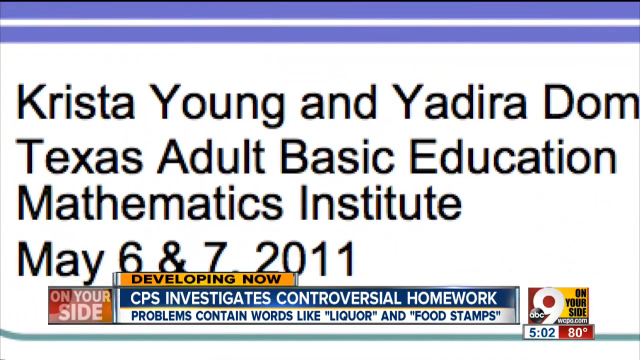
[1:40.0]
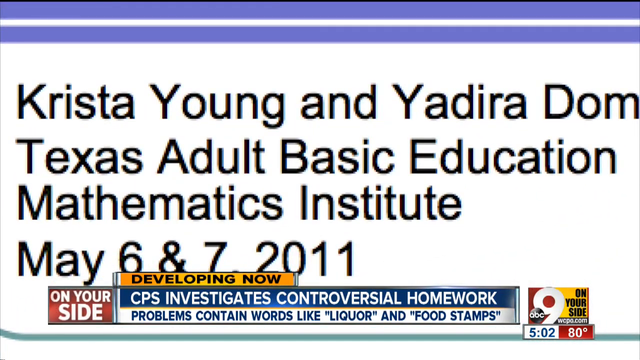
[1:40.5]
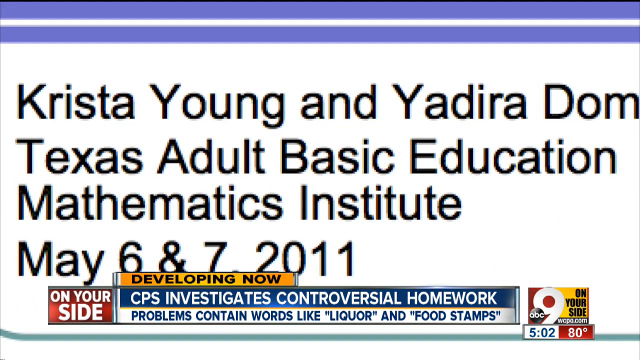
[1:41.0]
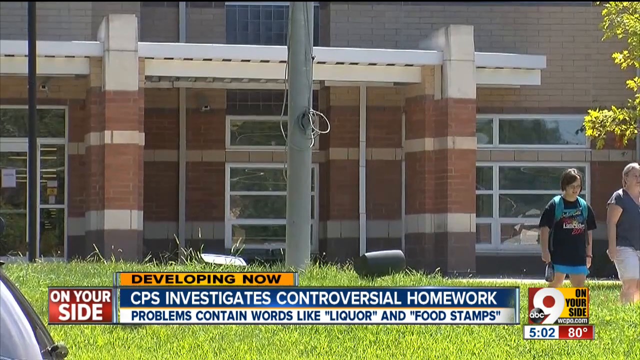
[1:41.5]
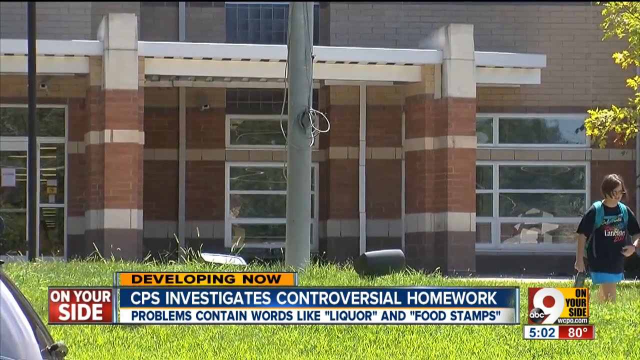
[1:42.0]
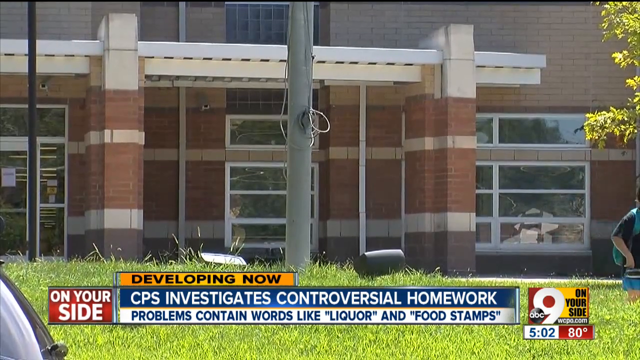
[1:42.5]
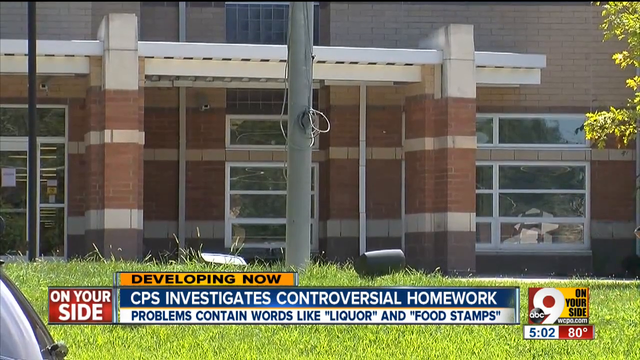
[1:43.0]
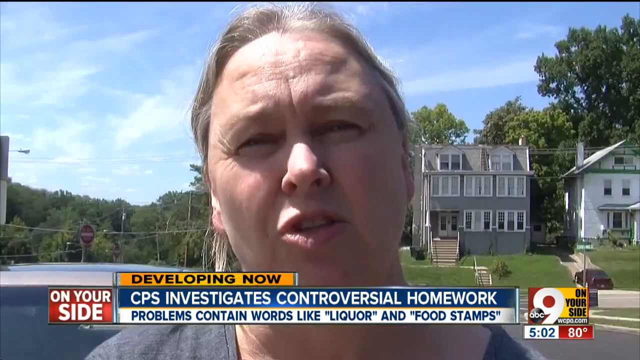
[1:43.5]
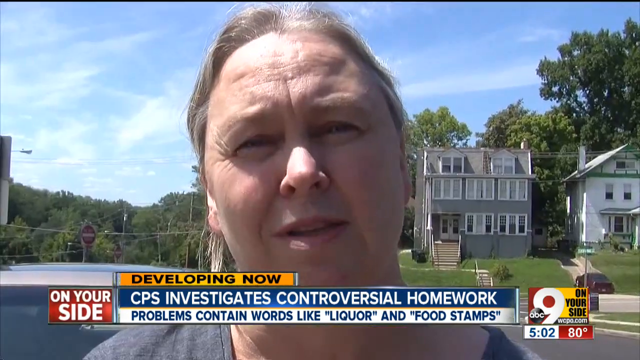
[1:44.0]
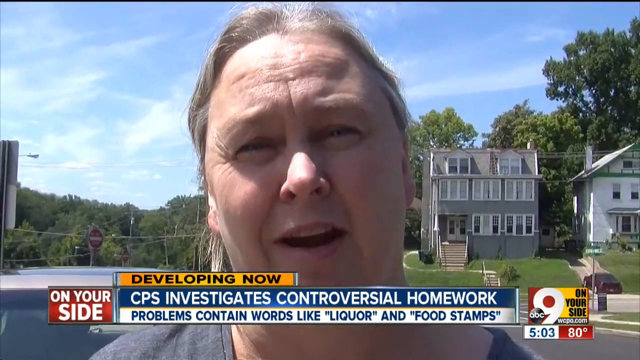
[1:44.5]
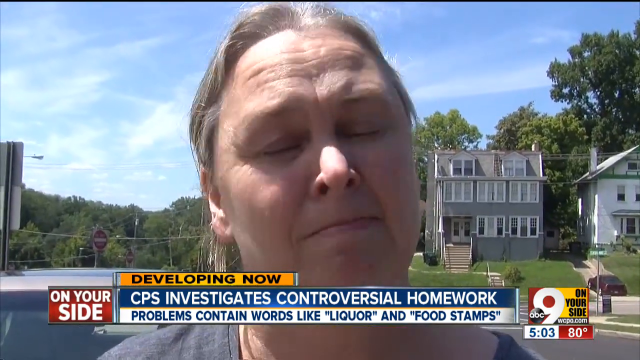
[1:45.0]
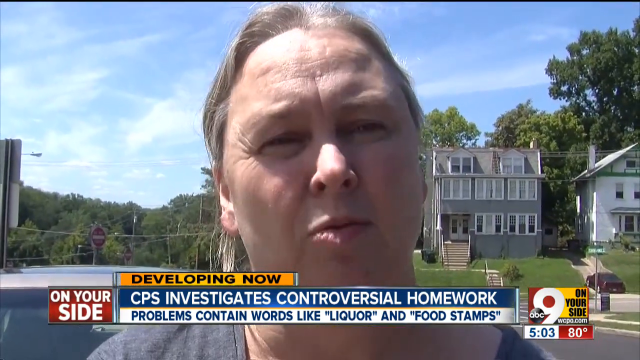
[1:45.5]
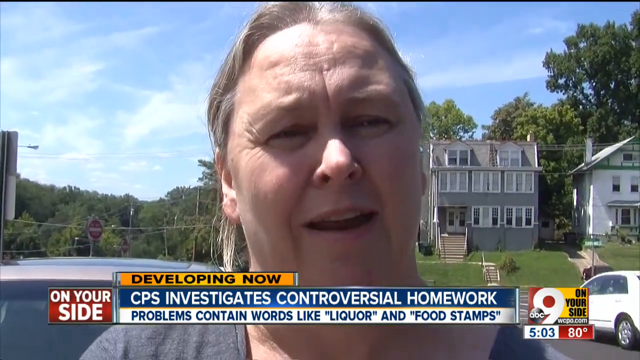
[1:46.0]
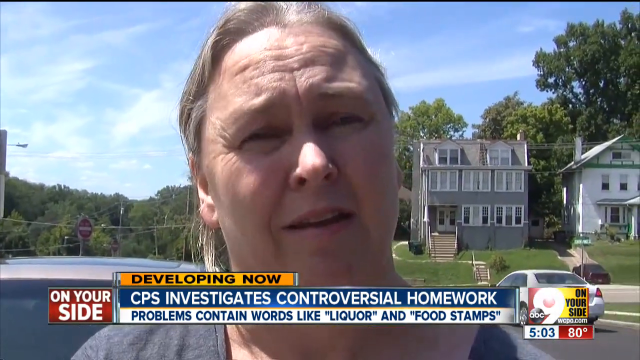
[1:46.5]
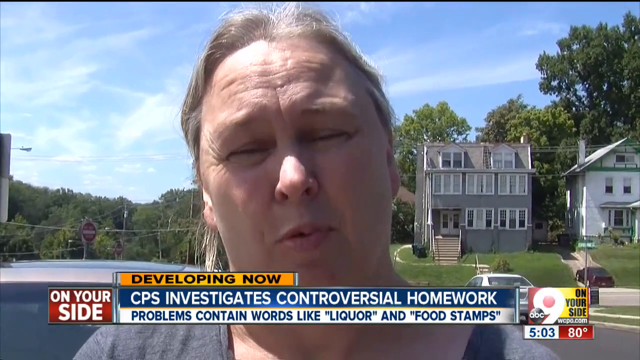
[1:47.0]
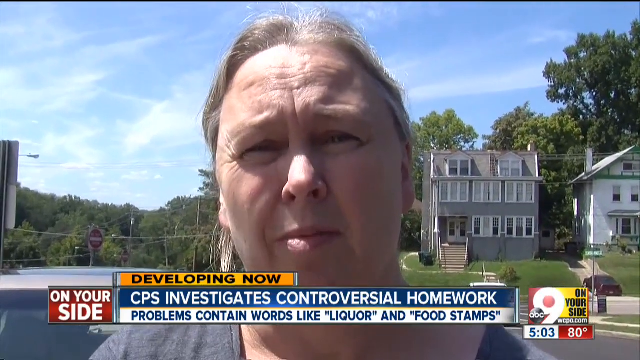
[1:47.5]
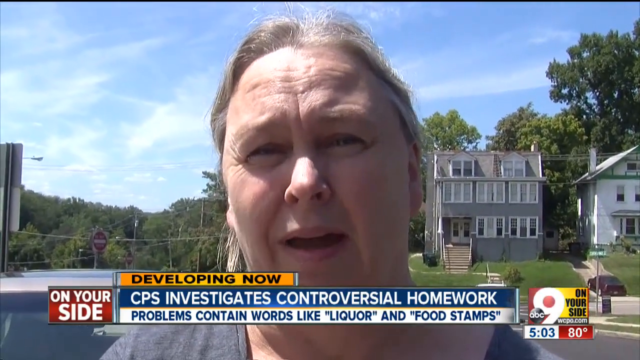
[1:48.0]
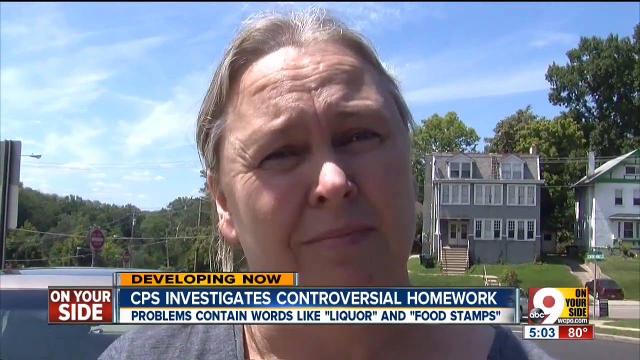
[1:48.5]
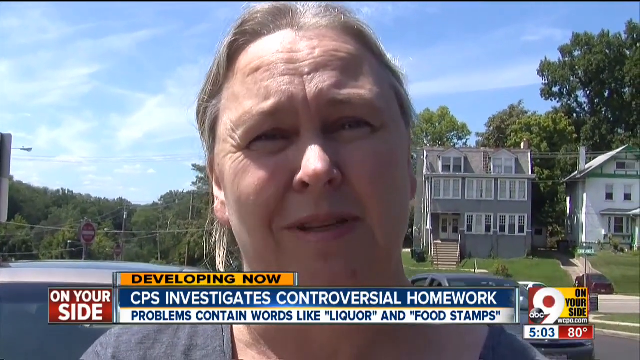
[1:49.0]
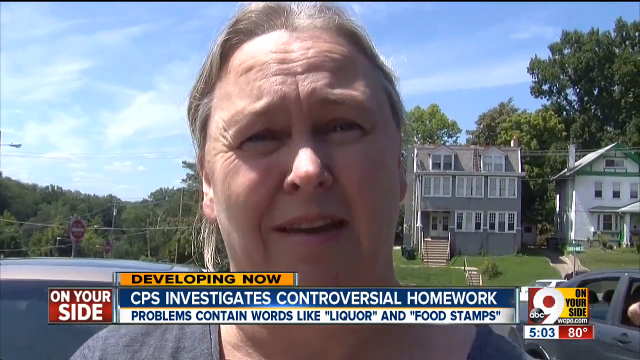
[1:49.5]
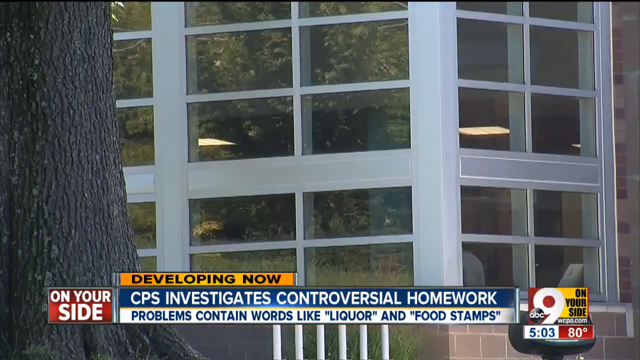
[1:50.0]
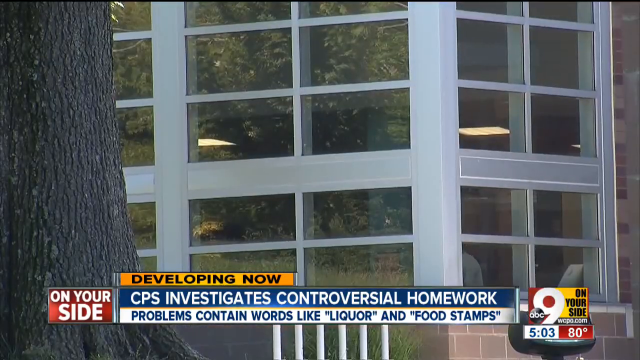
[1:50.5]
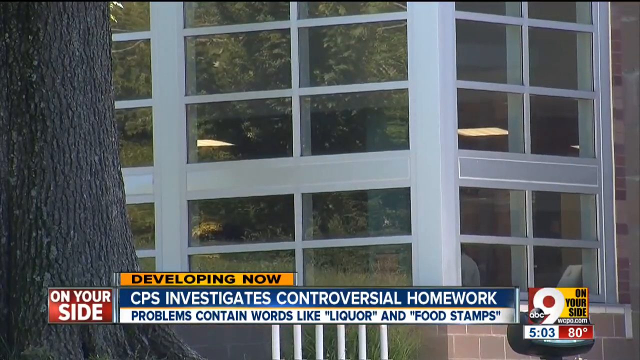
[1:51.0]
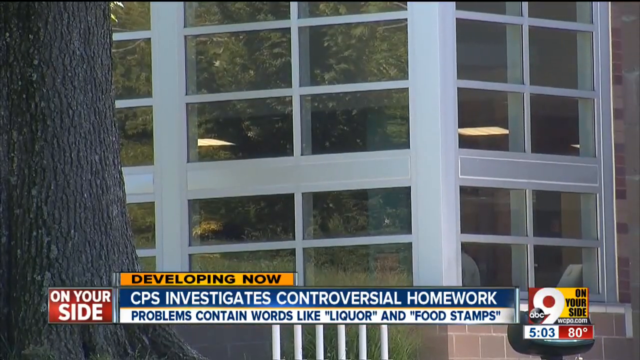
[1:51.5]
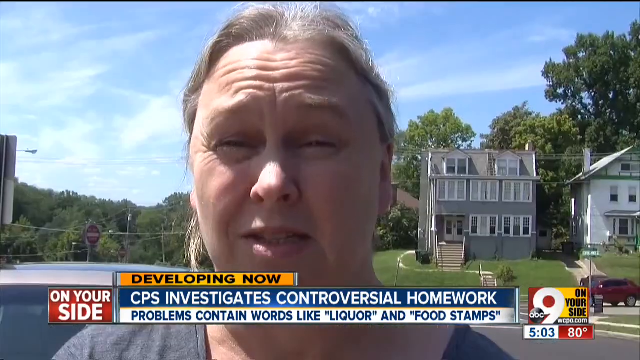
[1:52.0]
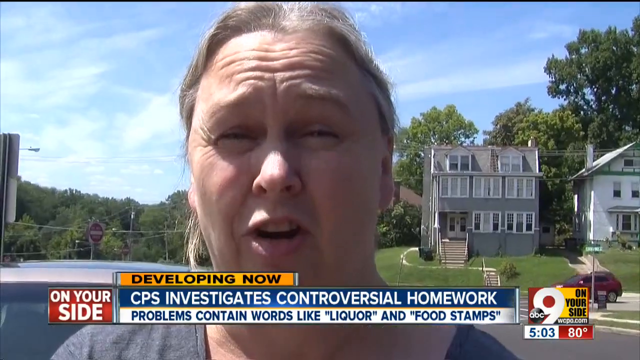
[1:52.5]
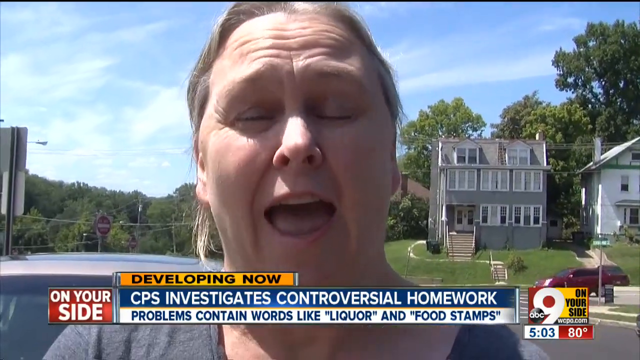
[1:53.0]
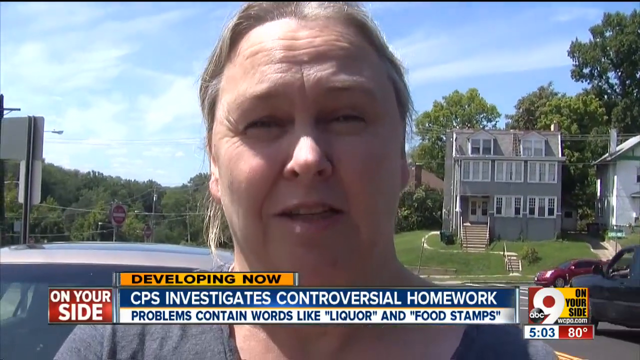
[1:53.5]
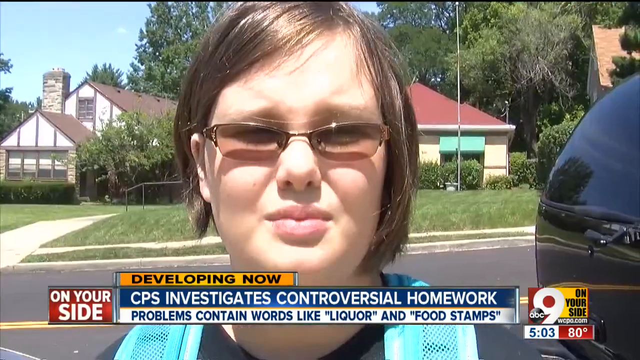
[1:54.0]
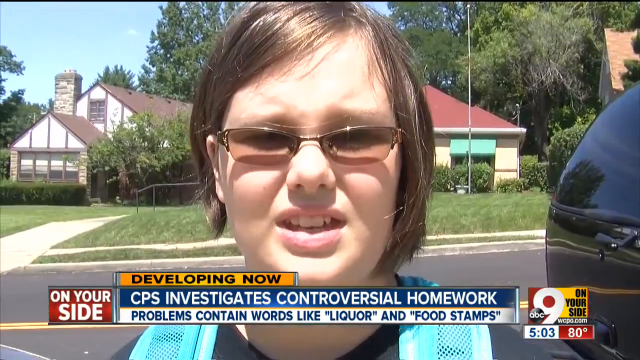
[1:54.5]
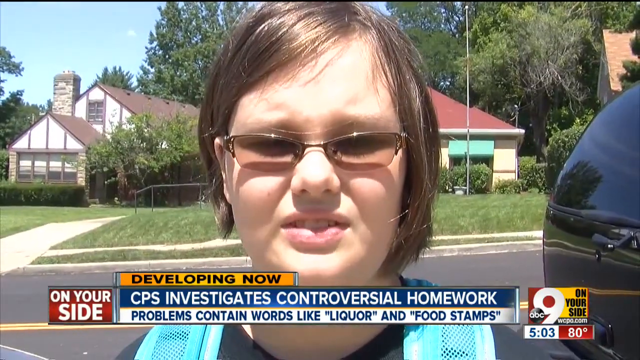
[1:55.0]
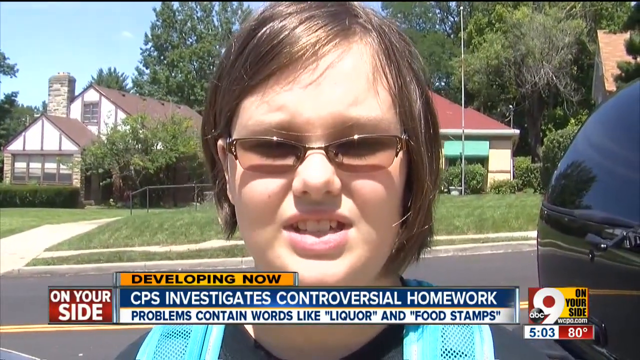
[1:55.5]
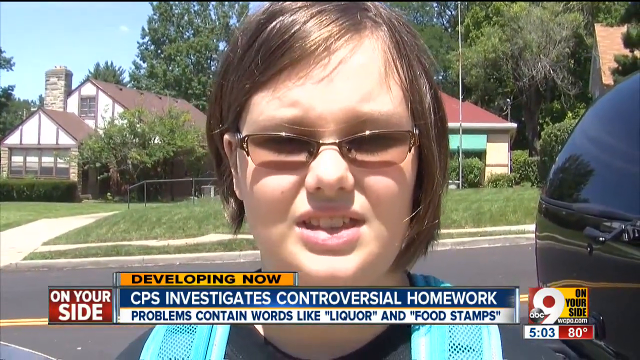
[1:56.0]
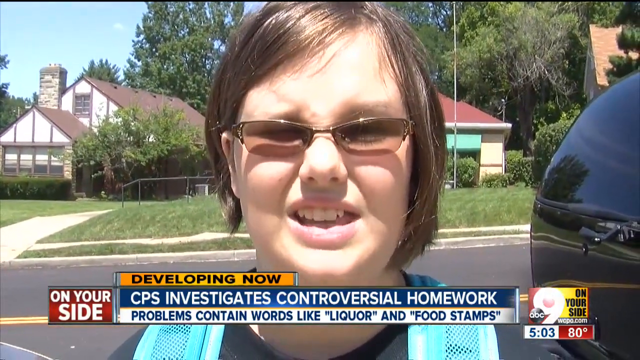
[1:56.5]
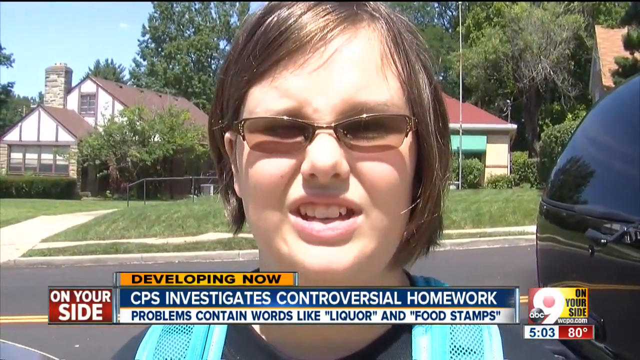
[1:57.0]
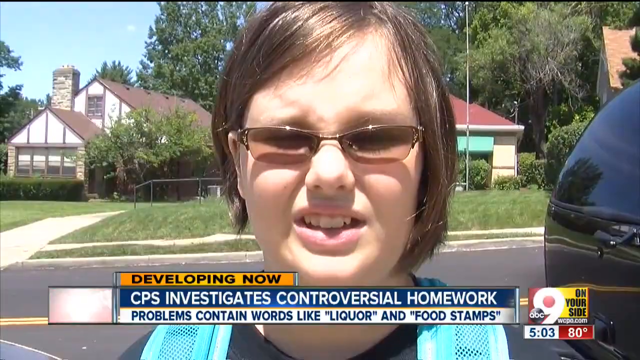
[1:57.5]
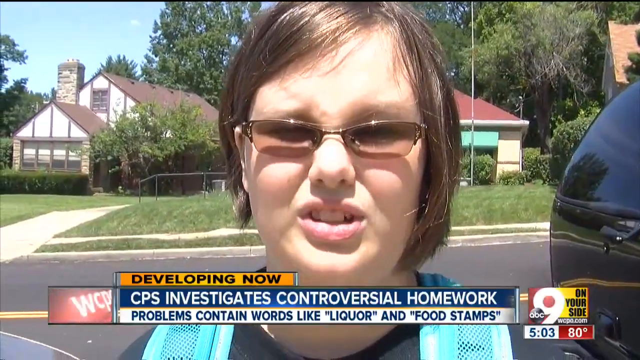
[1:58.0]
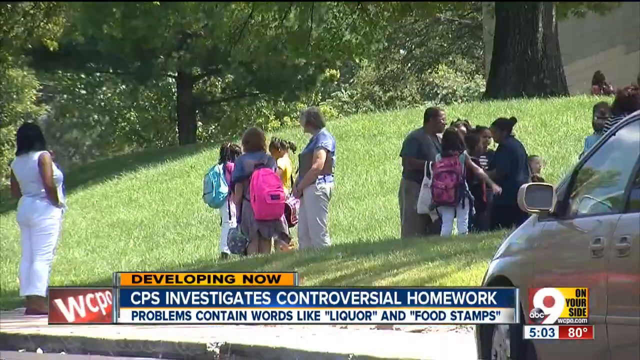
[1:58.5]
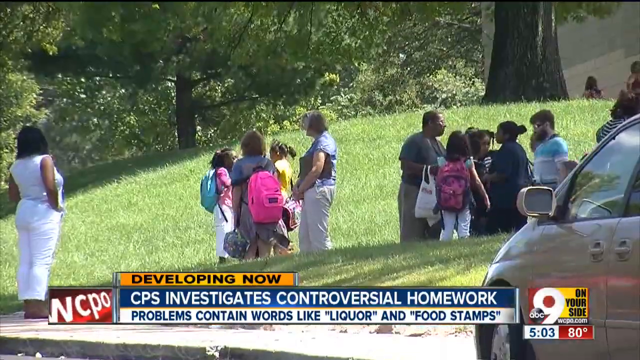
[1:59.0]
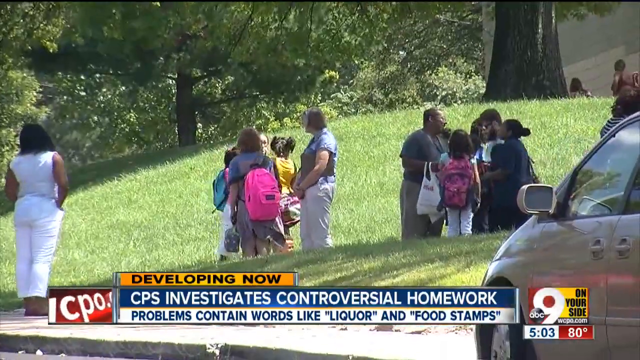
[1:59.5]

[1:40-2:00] The news program shows "developing now" at the bottom. On the screen is "Texas Adult Basic Education Mathematics Institute, May 6th and 7th, 2011," with names at the top. Two students on the right side of the screen walk away from what appears to be a school. Someone speaks to the camera and shakes their head, as a car drives by them on the right-hand side and another car passes toward the camera. An exterior shot shows a building with many windows, and then the video returns to the person speaking. A child with brown hair and glasses speaks to the camera and appears to have a green backpack. An exterior shot then shows multiple groups of people standing, some walking; it appears to be daytime, possibly when school has let out, with children wearing backpacks and possibly some parents in the area.